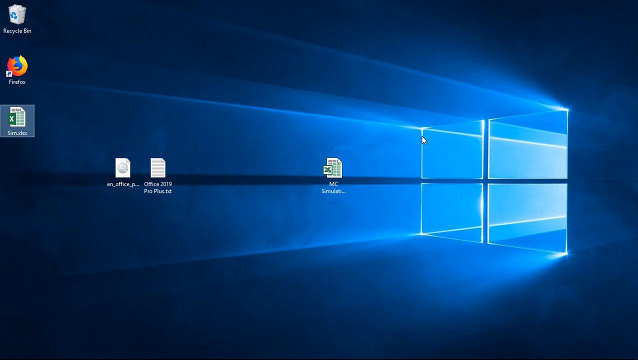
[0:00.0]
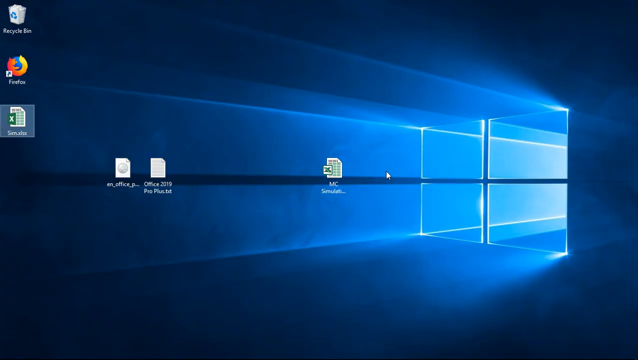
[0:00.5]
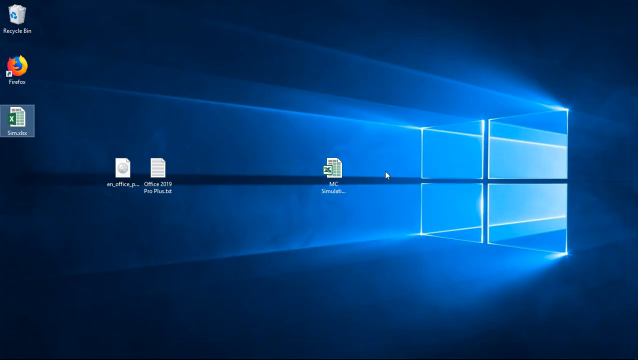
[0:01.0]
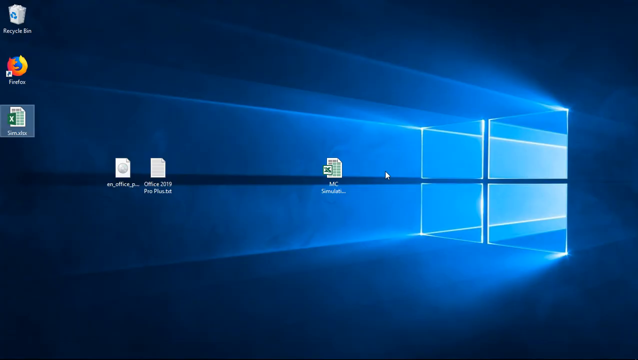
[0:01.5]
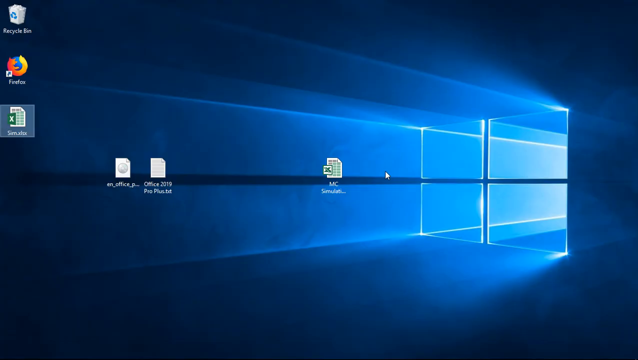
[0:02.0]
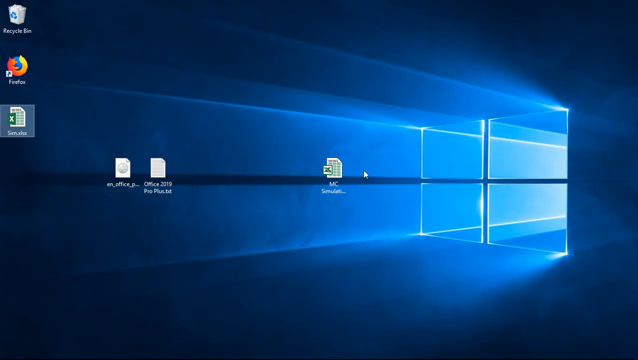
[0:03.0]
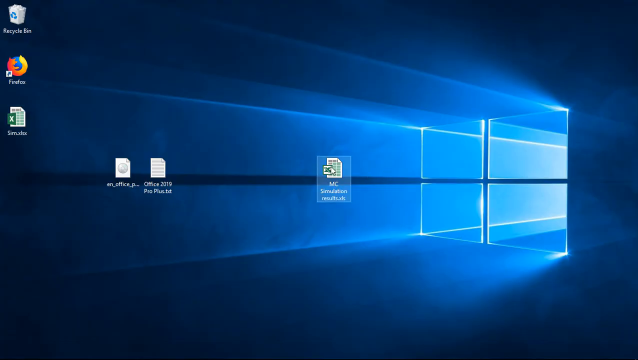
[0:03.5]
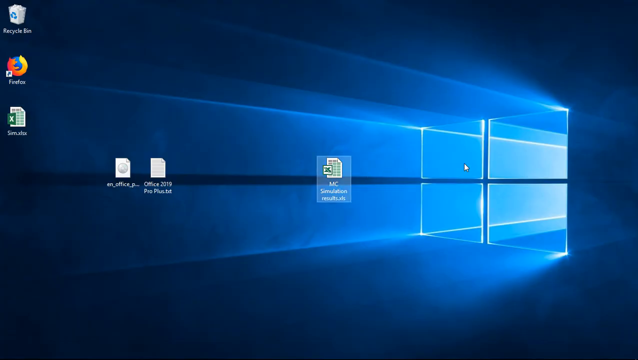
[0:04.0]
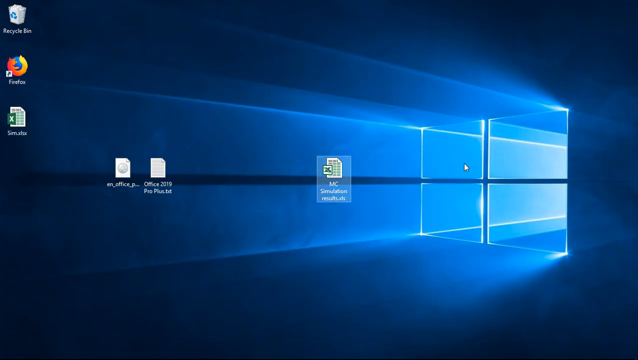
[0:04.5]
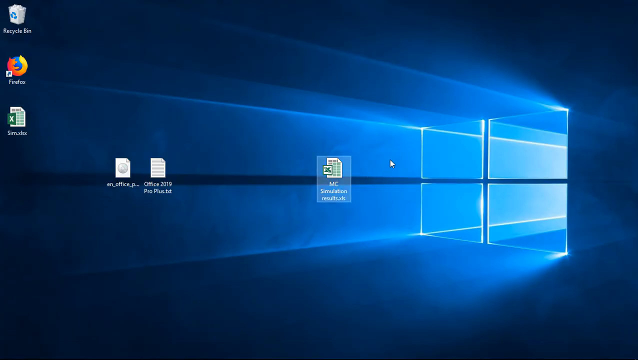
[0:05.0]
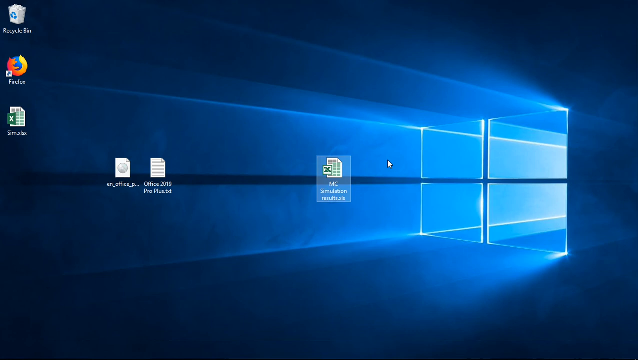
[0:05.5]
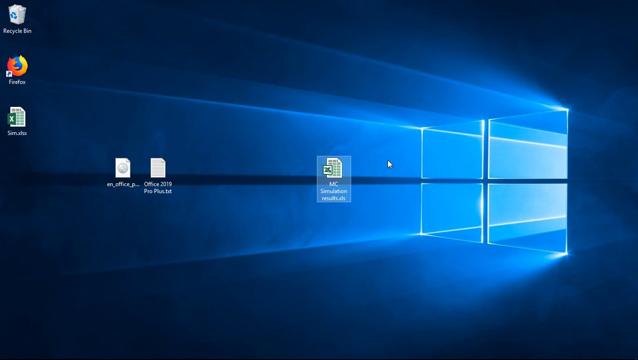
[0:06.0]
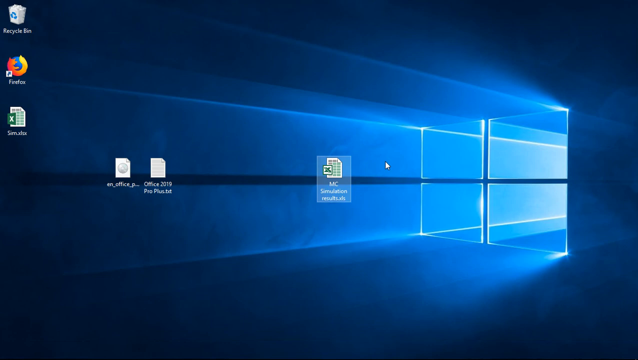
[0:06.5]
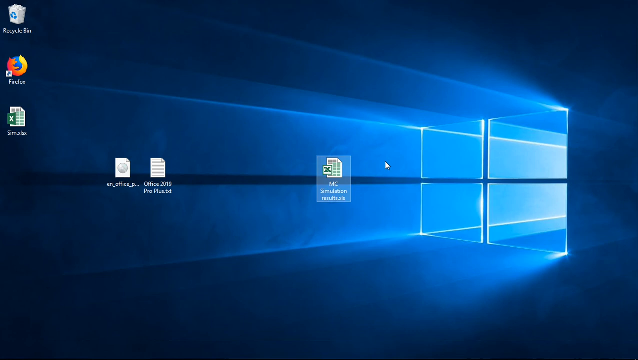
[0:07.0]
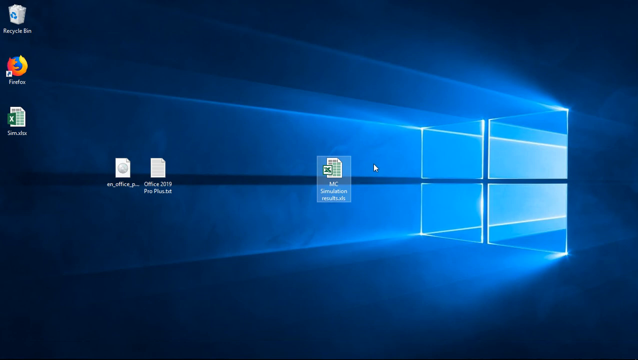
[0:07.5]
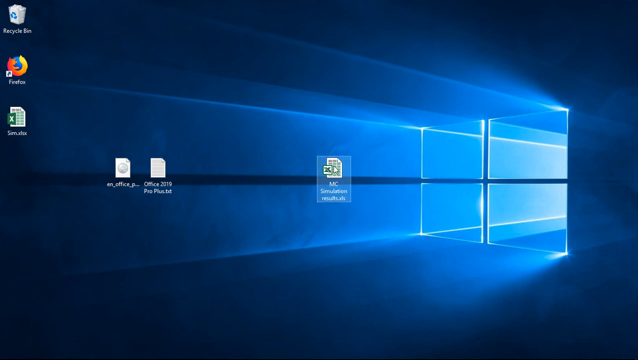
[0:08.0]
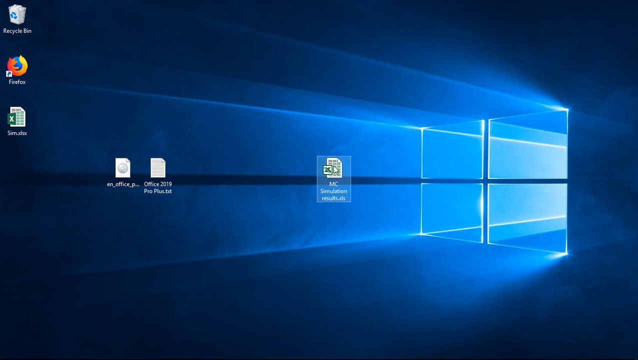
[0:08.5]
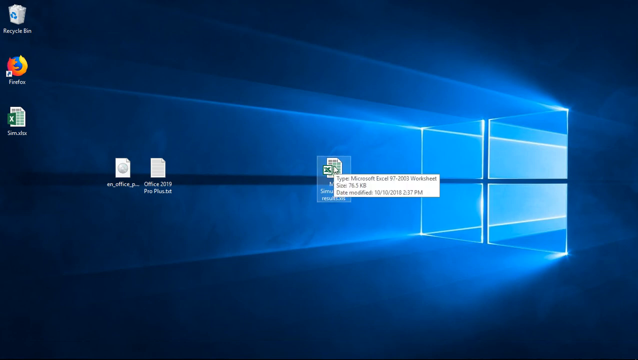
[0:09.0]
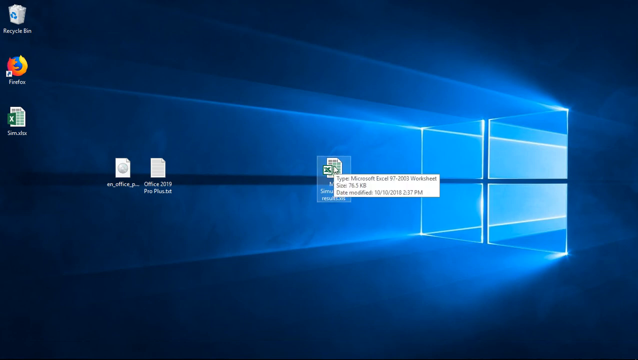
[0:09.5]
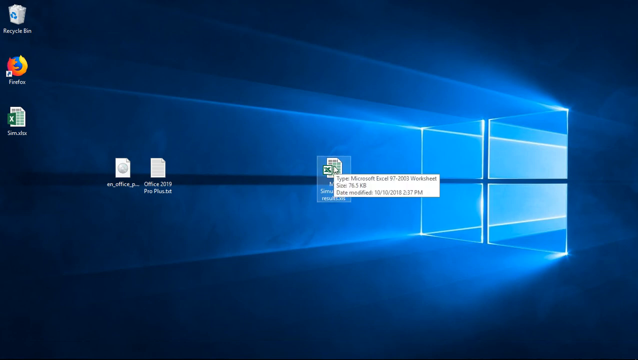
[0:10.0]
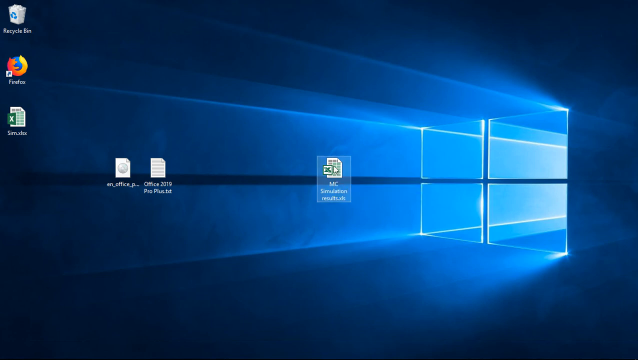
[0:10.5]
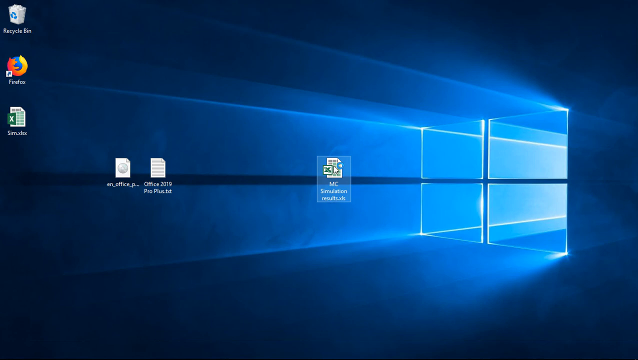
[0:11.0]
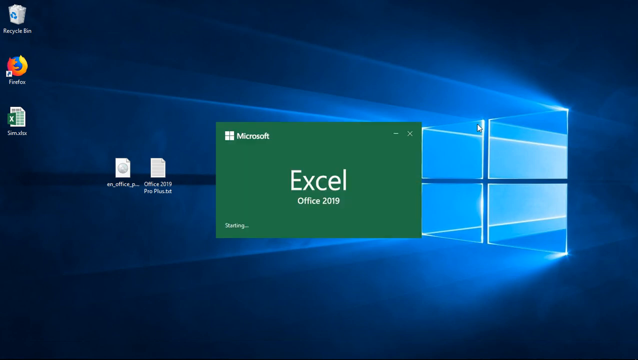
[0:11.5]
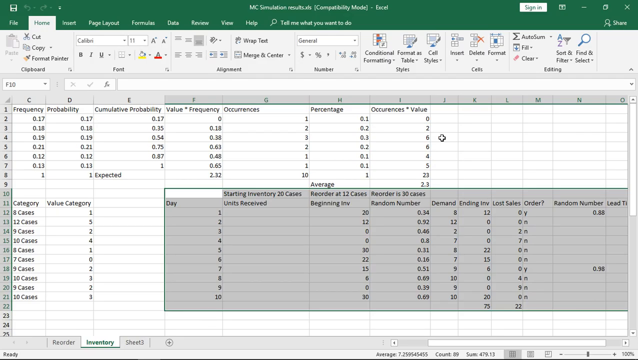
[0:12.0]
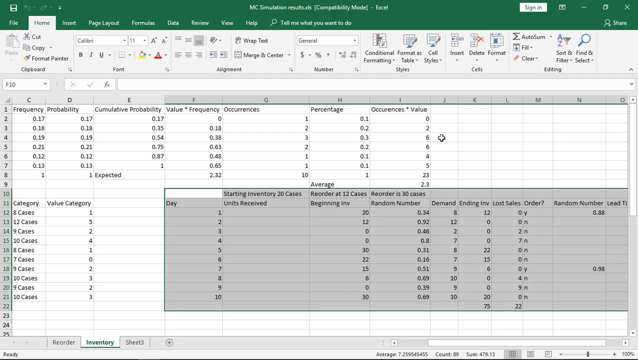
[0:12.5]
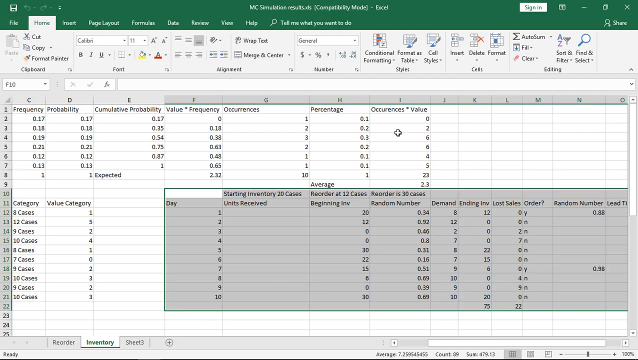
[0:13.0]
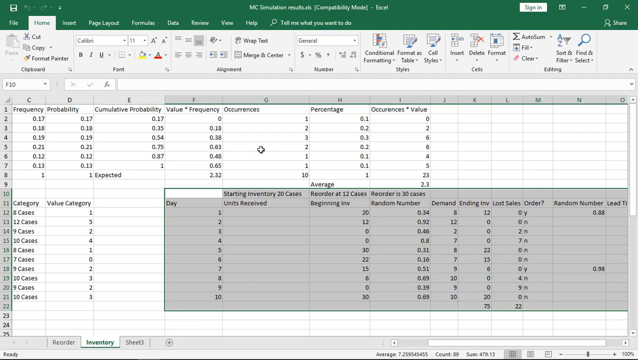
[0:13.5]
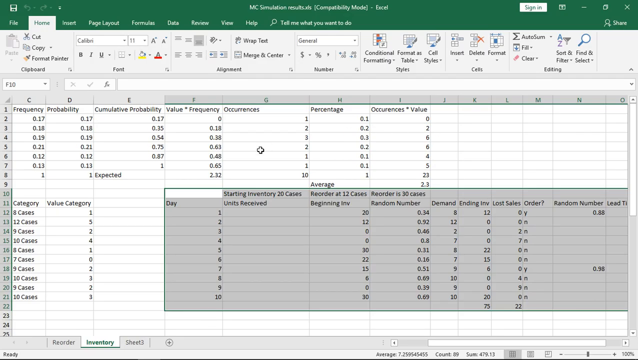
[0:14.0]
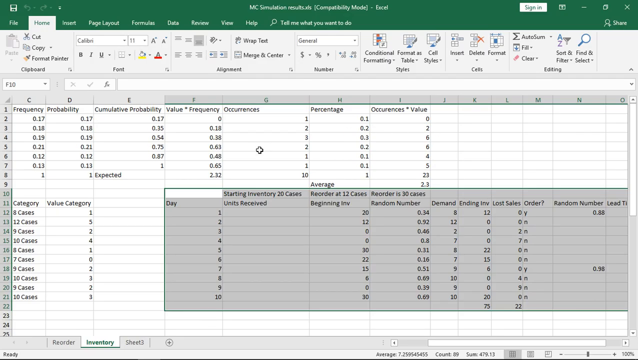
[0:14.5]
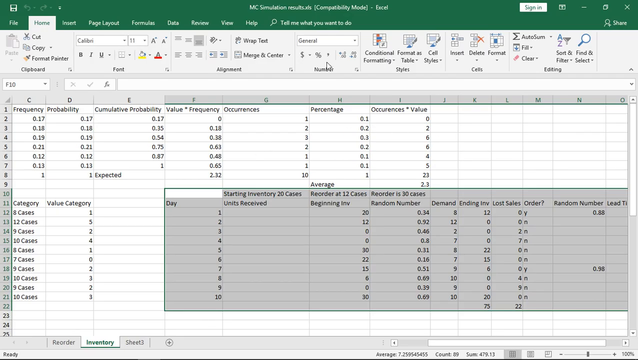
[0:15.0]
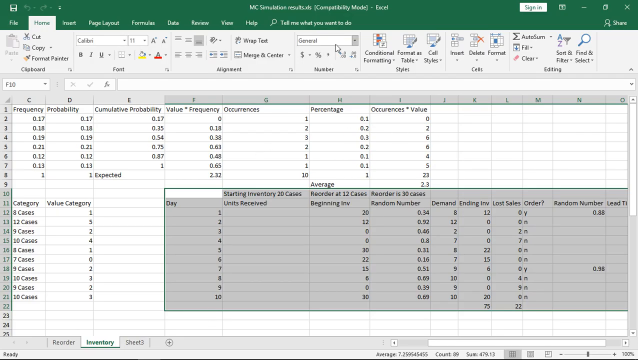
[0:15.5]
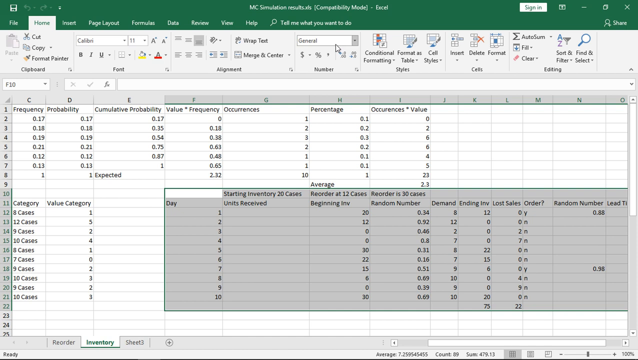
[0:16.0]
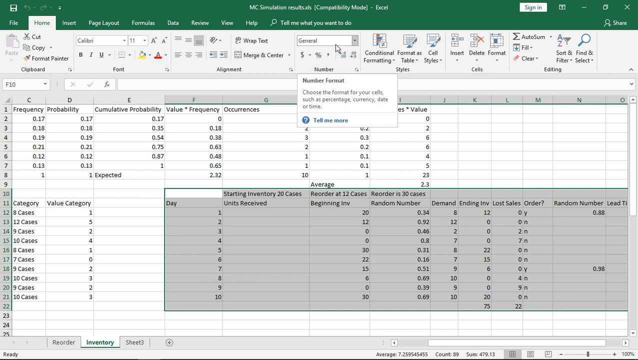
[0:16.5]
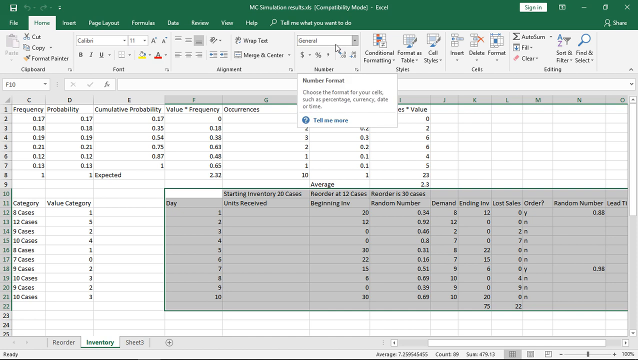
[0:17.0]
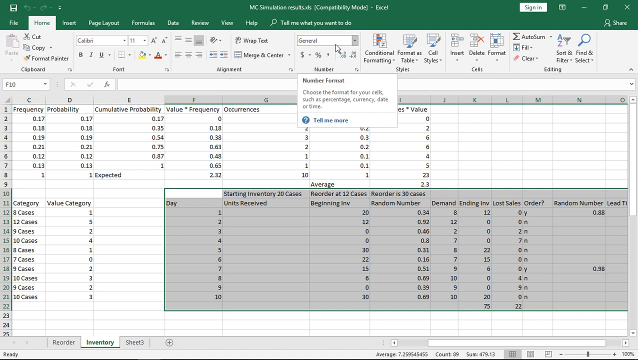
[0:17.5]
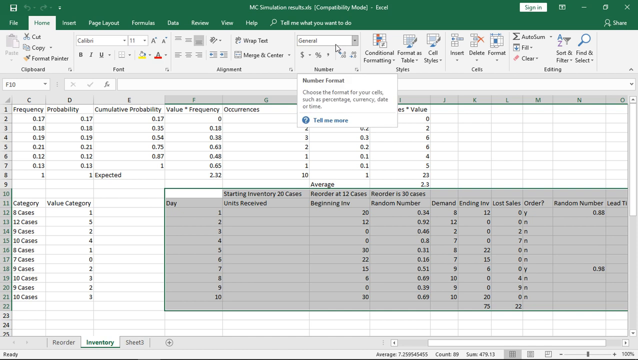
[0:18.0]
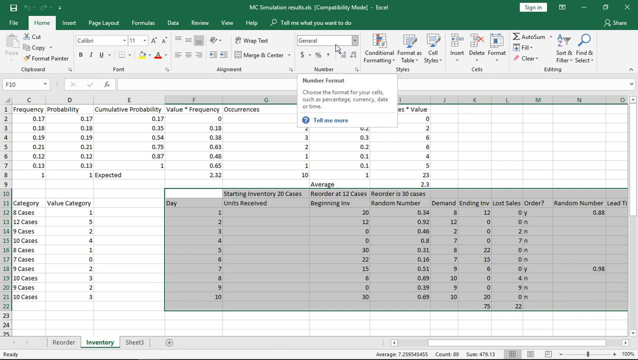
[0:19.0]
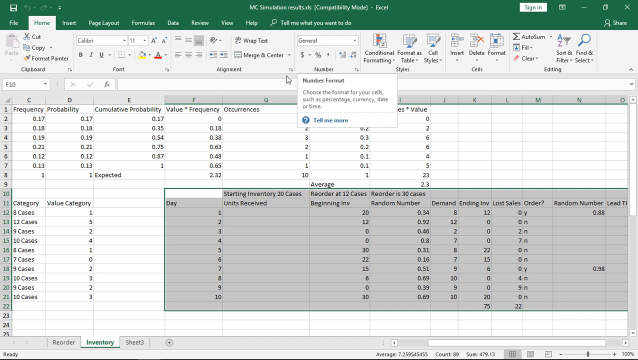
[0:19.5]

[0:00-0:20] A folder has been placed on the desktop. It contains an Excel document with all the numbers and information already inserted, and the spreadsheet shows numbers in different categories. The number format is set to general, with no other specification. The desktop shows a blue Windows icon with a light, dimmed reflection, along with Firefox and Recycle Bin icons. The video goes into Excel and shows what the spreadsheet looks like with all the numbers on it.